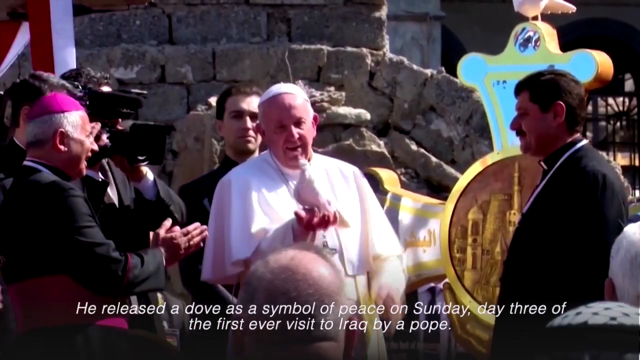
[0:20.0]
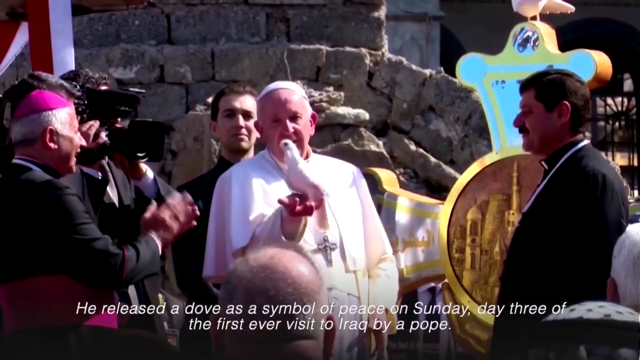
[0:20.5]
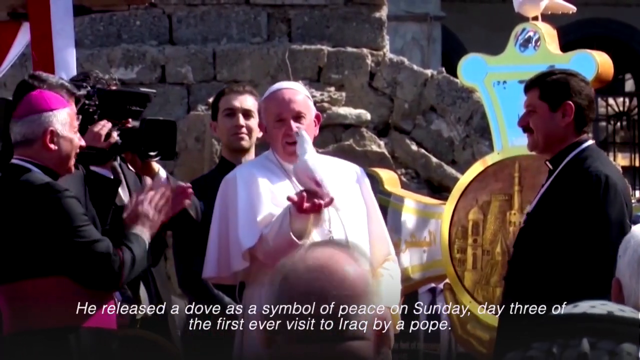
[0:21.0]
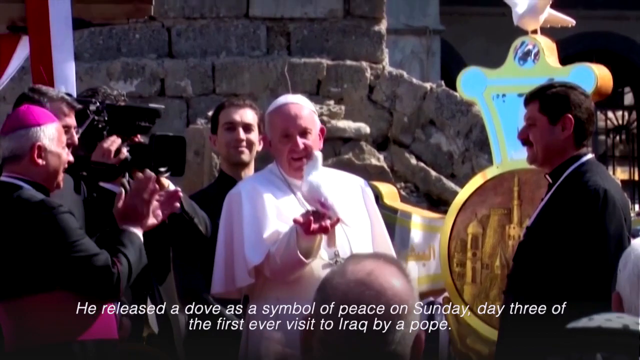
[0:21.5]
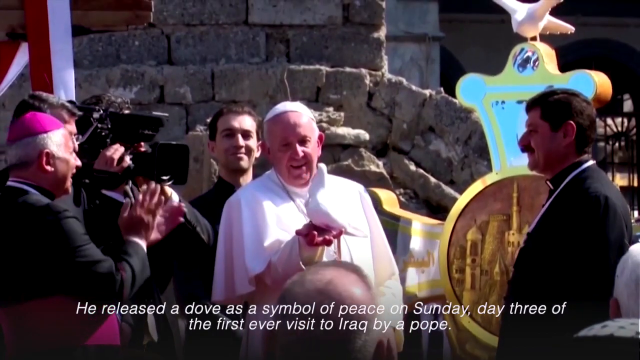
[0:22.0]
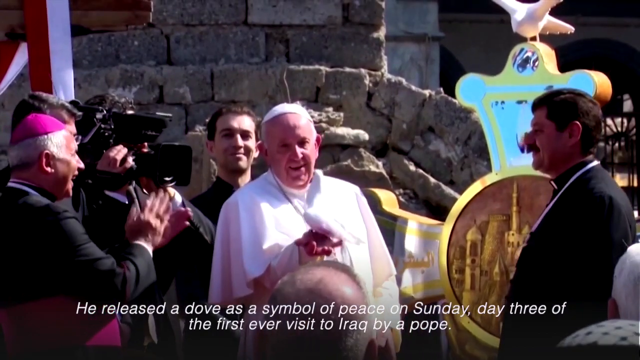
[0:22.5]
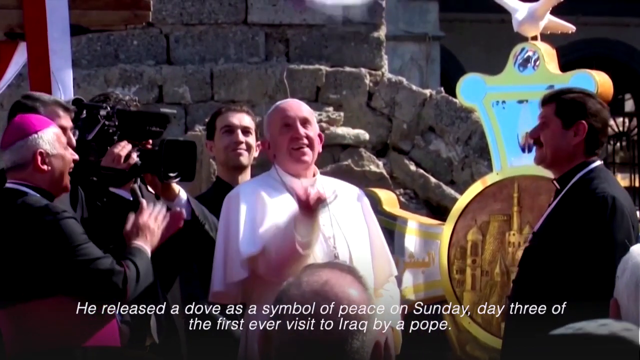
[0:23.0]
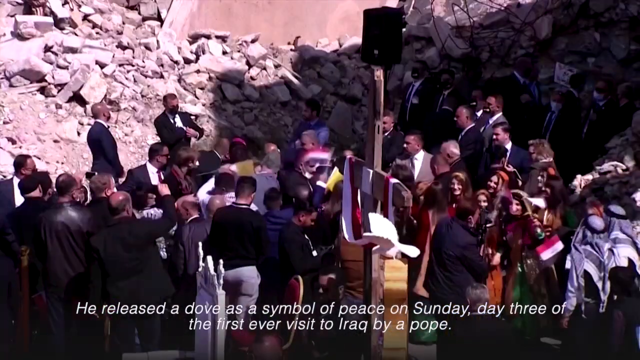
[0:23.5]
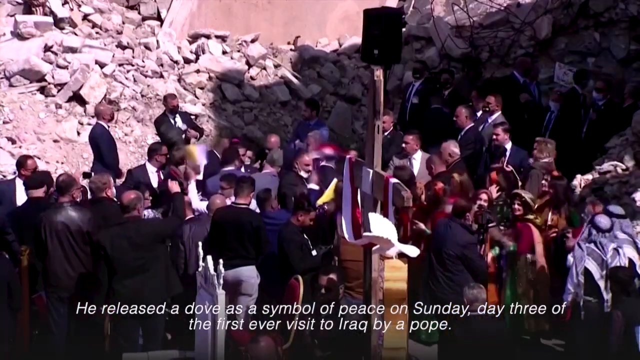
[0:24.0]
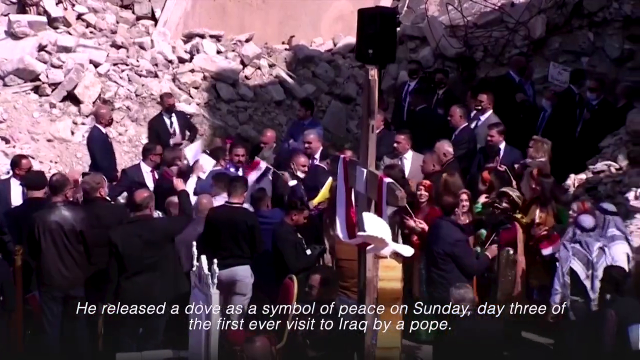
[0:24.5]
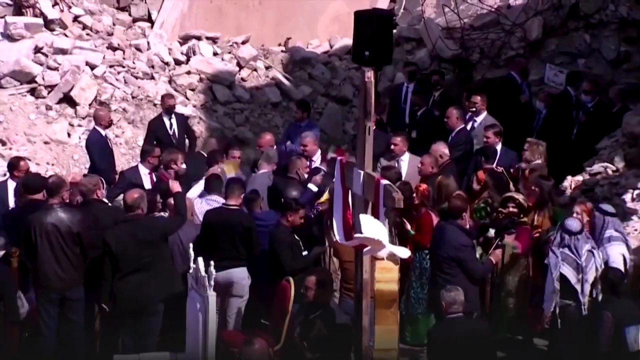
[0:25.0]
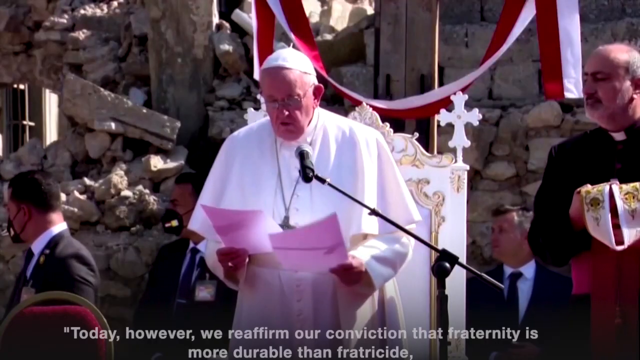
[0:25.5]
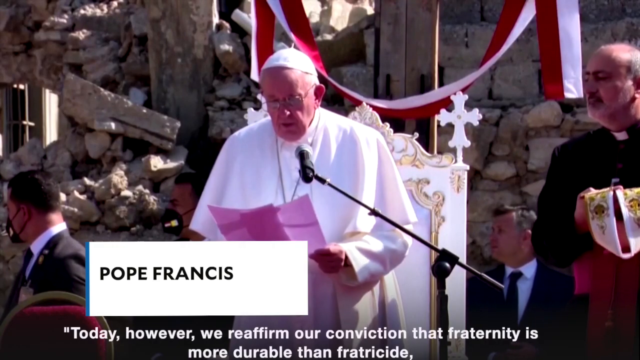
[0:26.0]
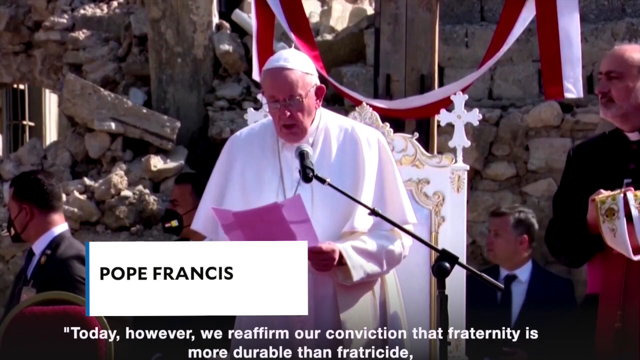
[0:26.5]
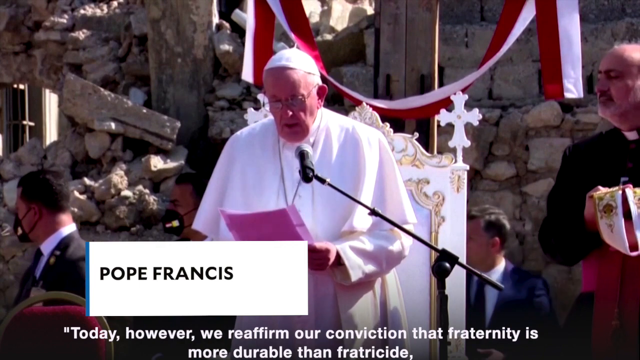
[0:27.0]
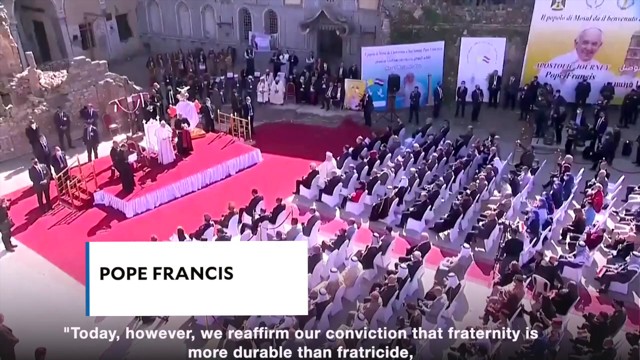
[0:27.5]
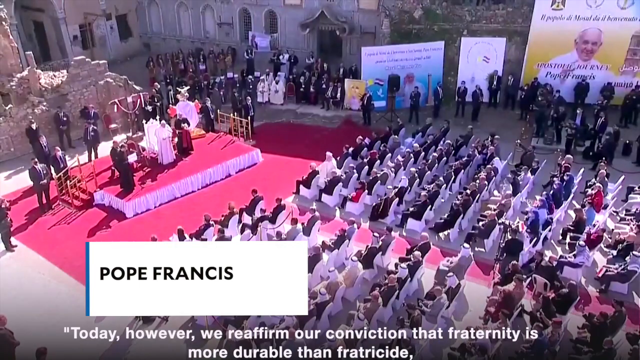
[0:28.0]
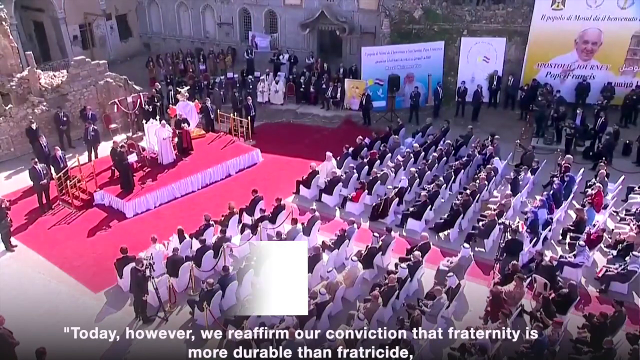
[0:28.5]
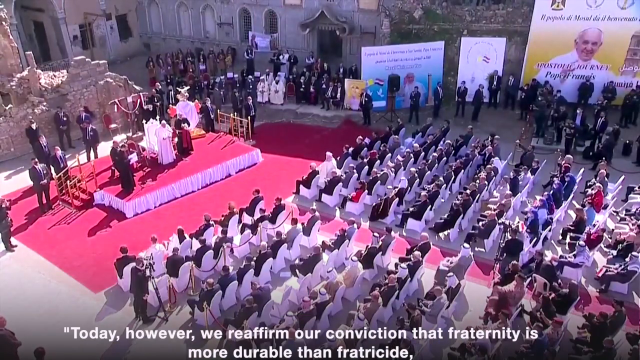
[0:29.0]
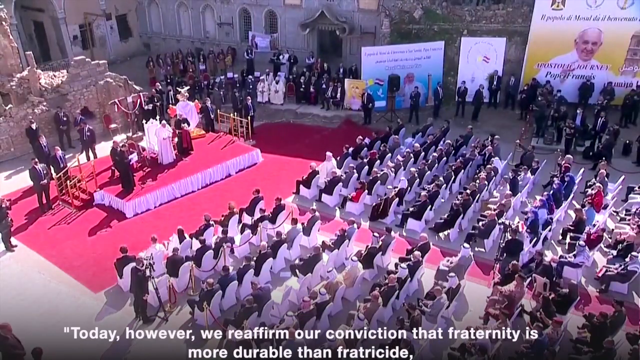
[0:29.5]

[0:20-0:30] Pope Francis holds a white dove in his hand and releases it, and it flies upwards. He then appears to be at a microphone giving some kind of speech. Words on the screen describe the event, saying the dove was a symbol of peace. The setting looks like a street that is also kind of in ruins; the area looks like it has been bombed, with destroyed buildings and bricks everywhere.